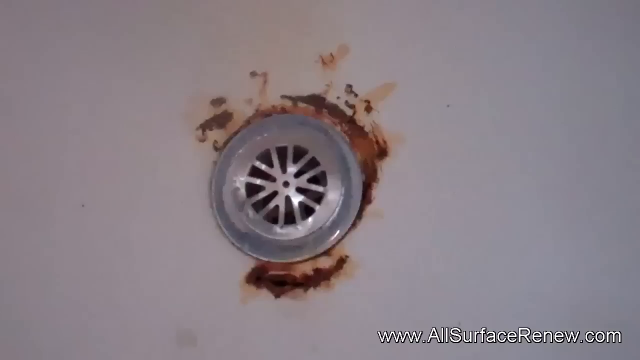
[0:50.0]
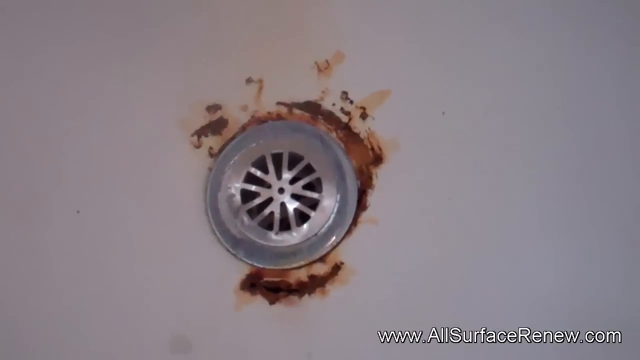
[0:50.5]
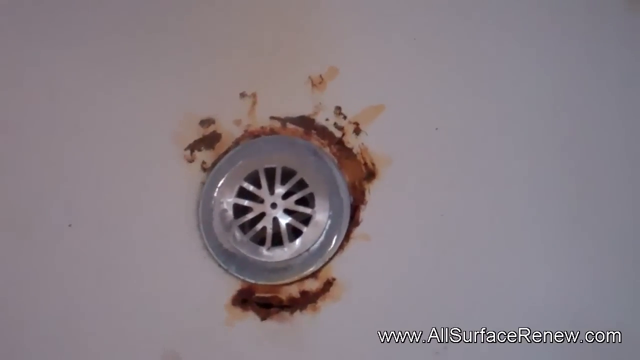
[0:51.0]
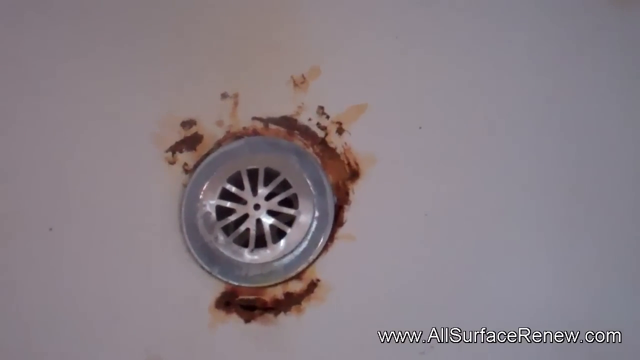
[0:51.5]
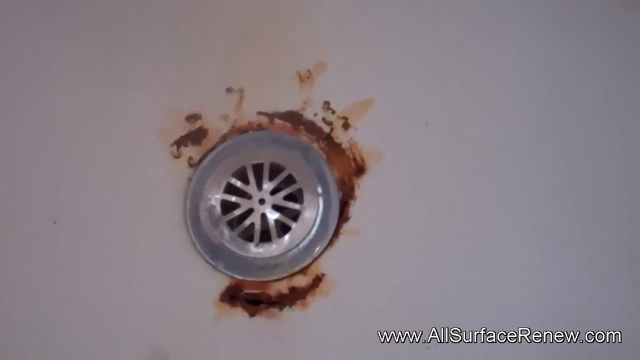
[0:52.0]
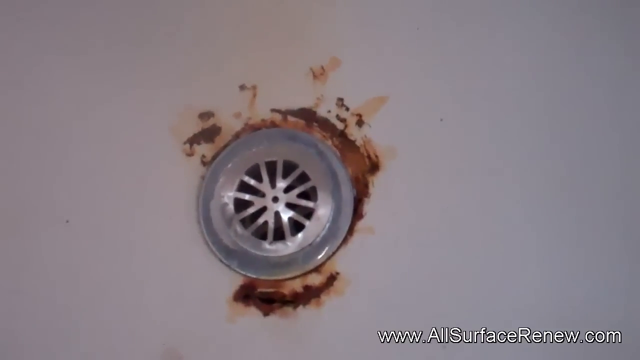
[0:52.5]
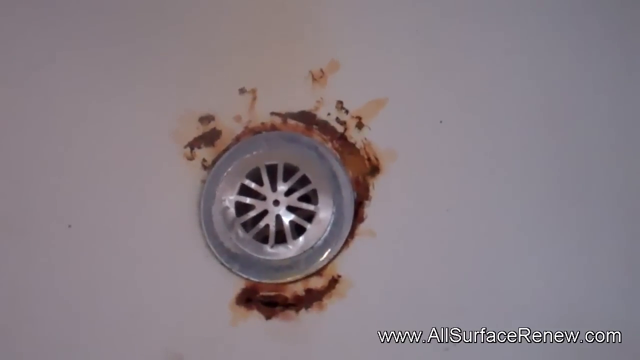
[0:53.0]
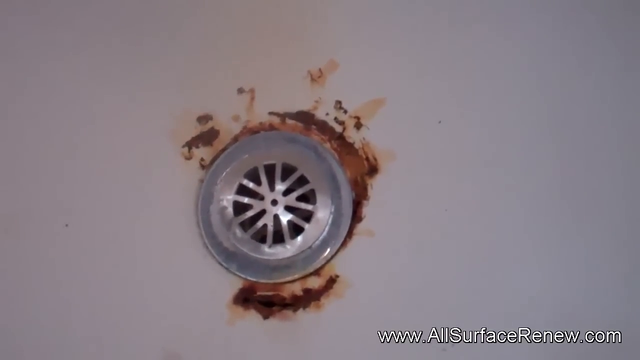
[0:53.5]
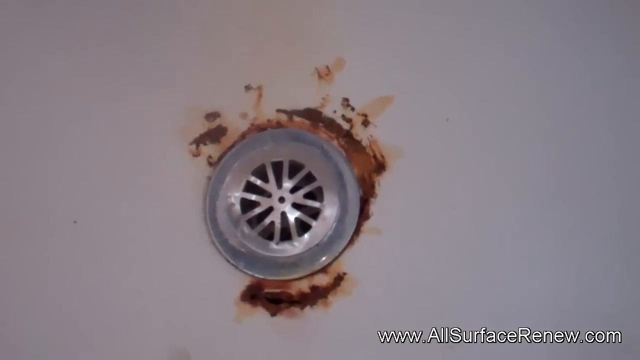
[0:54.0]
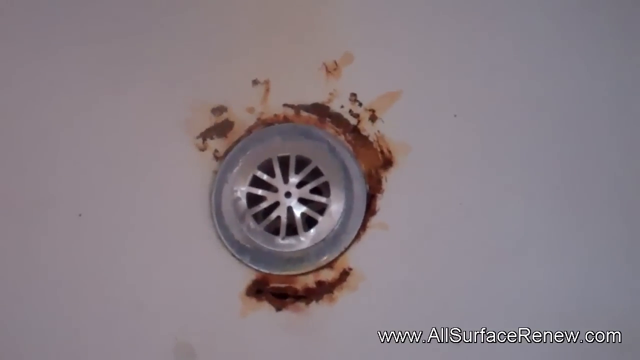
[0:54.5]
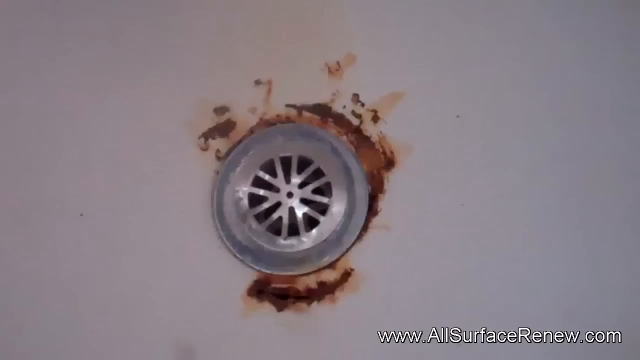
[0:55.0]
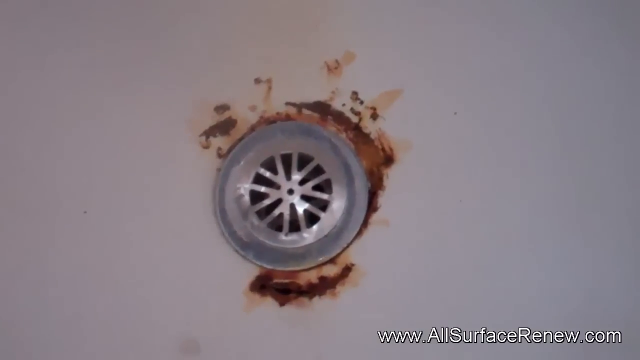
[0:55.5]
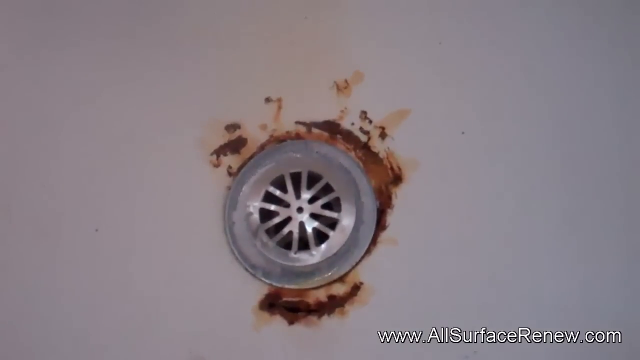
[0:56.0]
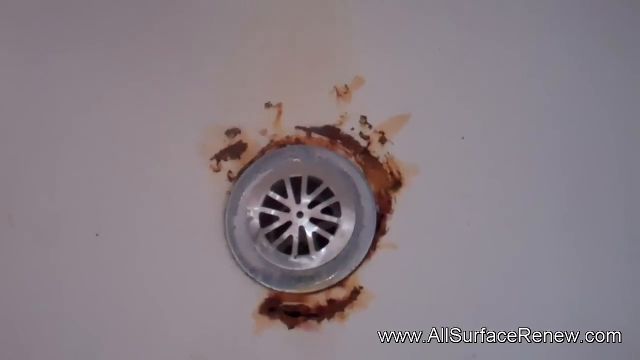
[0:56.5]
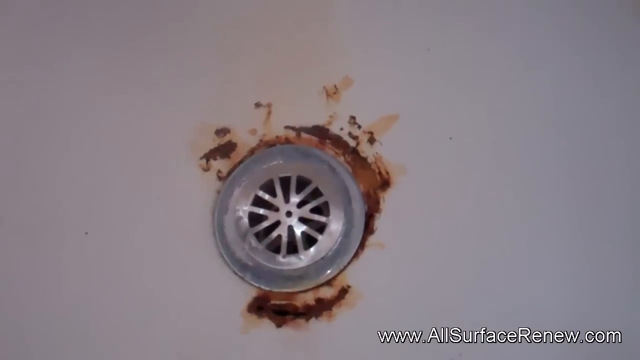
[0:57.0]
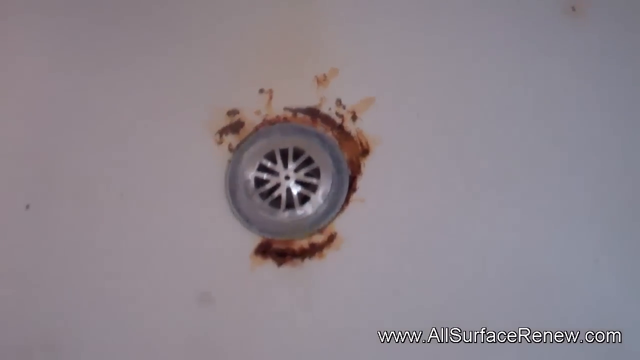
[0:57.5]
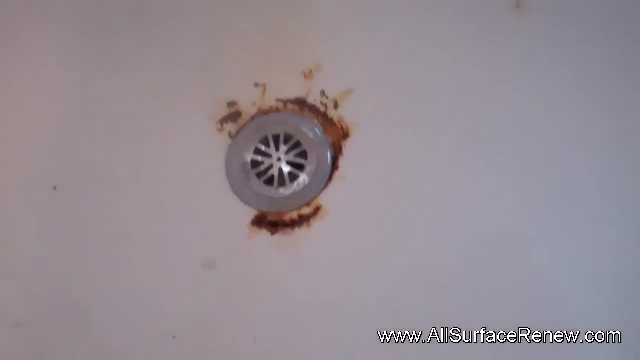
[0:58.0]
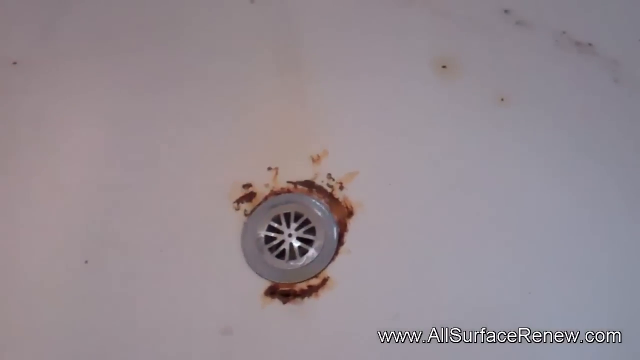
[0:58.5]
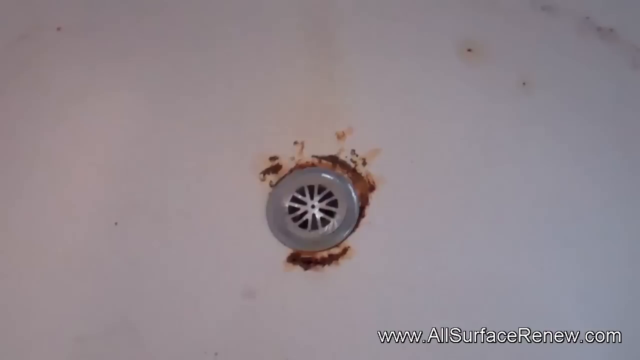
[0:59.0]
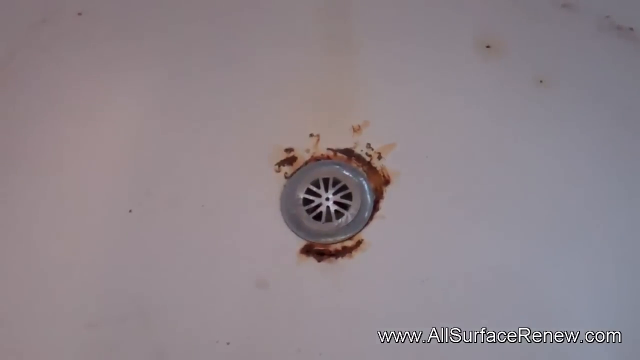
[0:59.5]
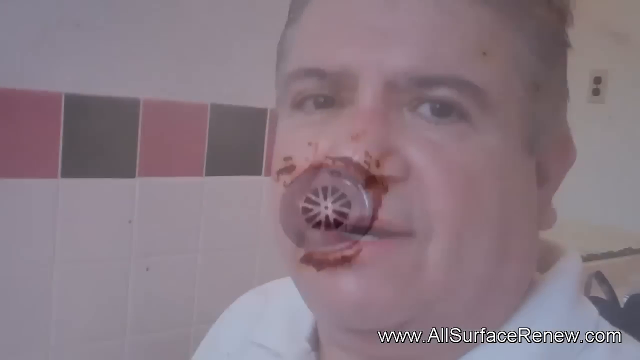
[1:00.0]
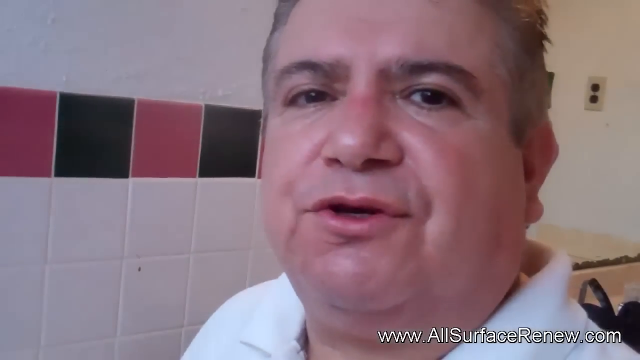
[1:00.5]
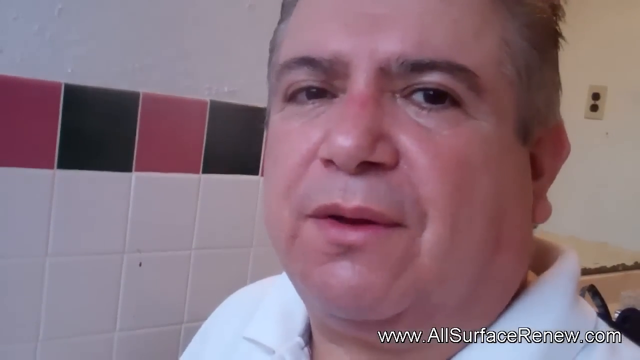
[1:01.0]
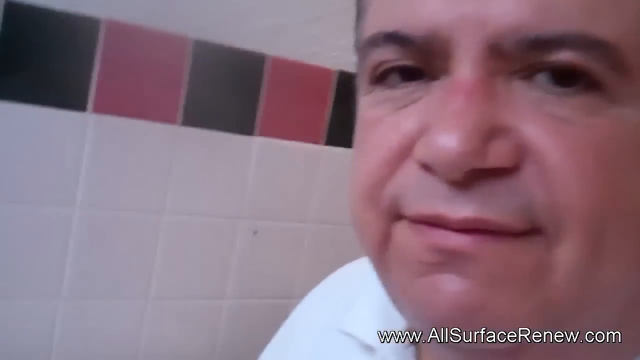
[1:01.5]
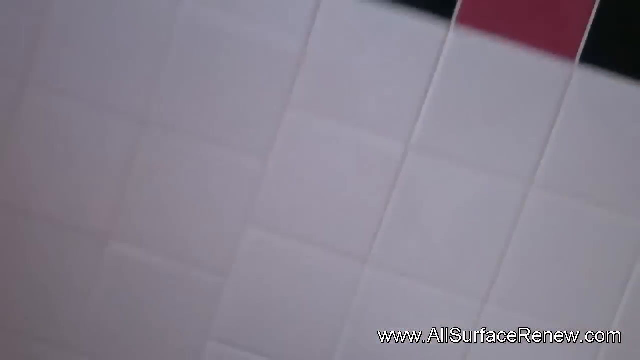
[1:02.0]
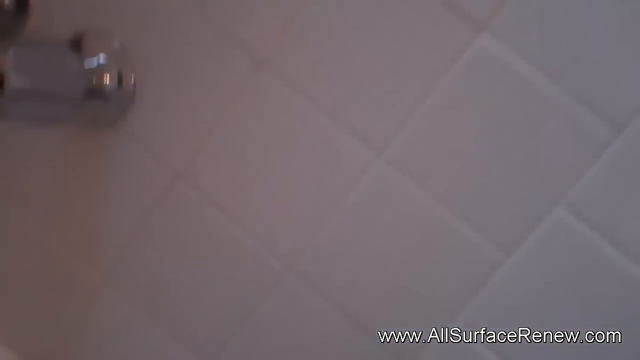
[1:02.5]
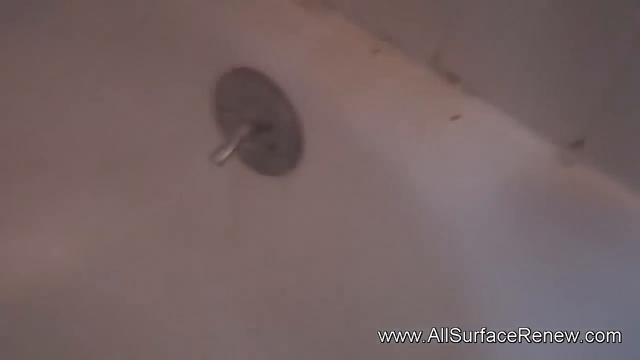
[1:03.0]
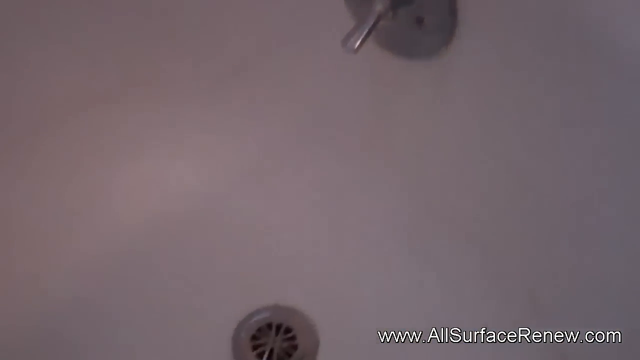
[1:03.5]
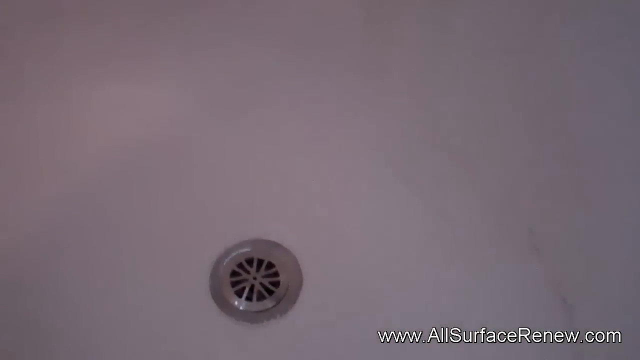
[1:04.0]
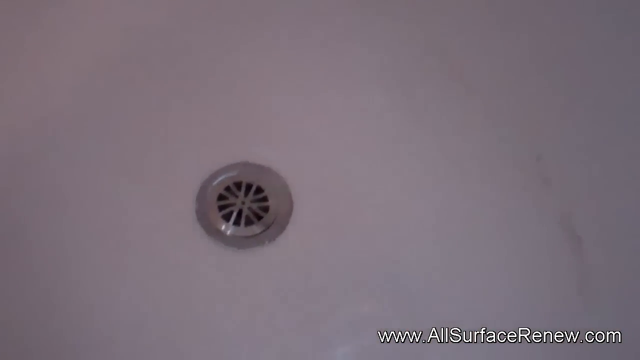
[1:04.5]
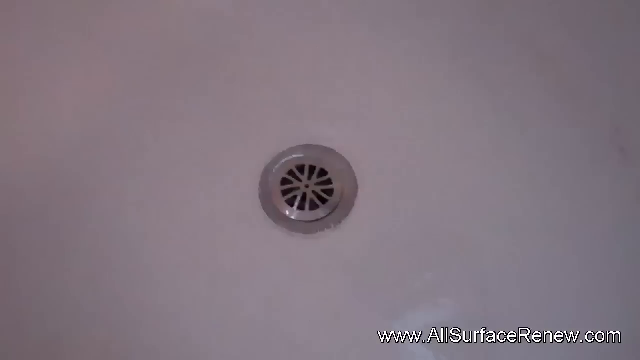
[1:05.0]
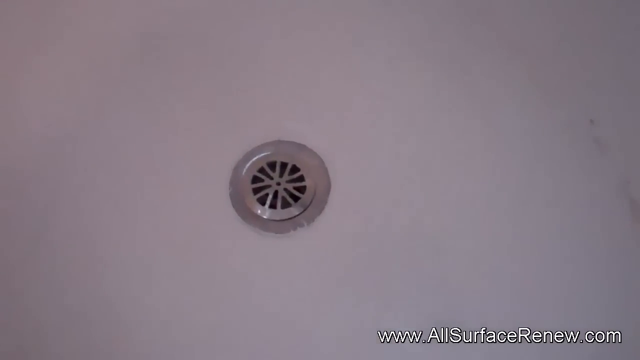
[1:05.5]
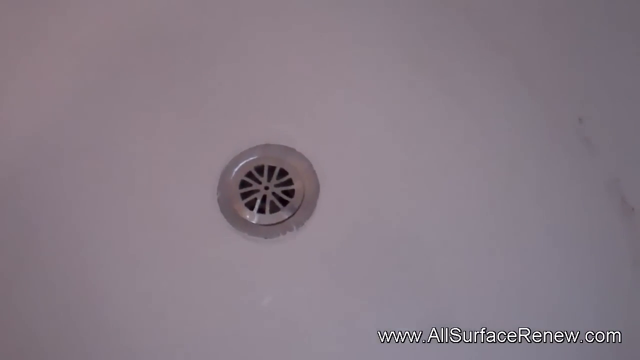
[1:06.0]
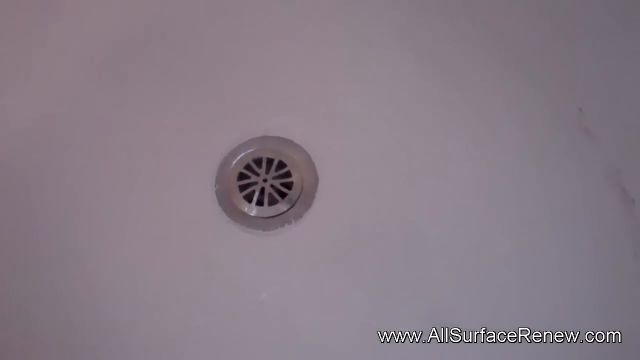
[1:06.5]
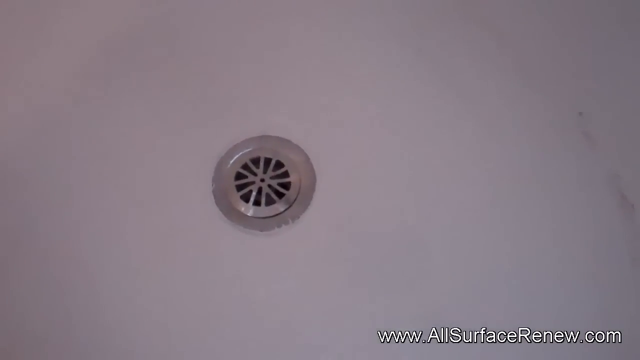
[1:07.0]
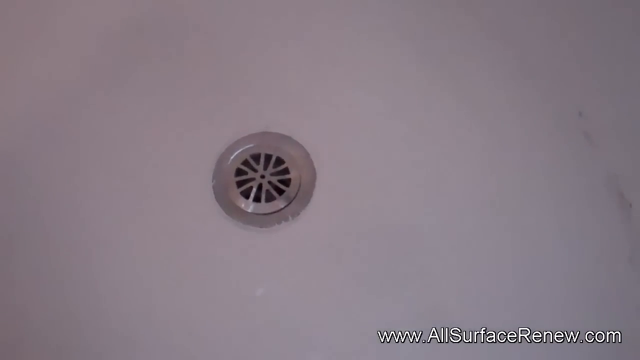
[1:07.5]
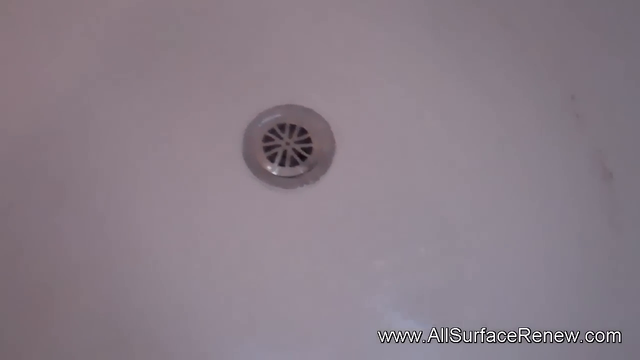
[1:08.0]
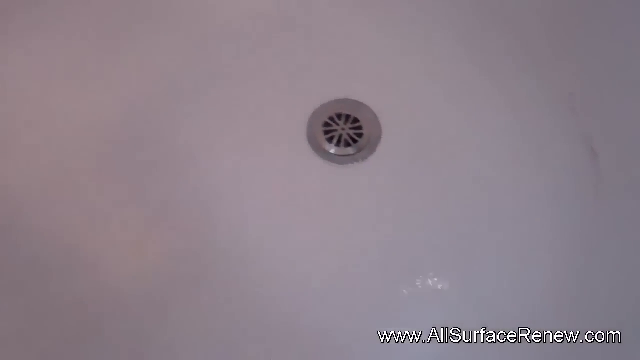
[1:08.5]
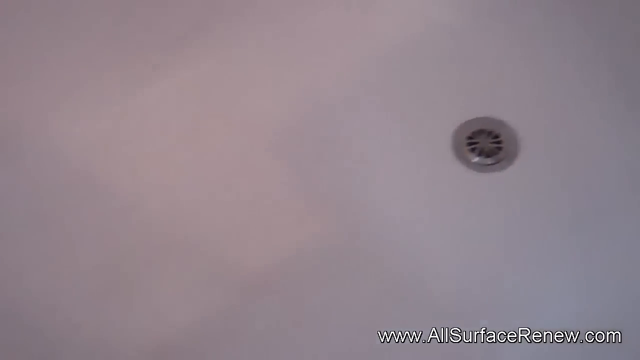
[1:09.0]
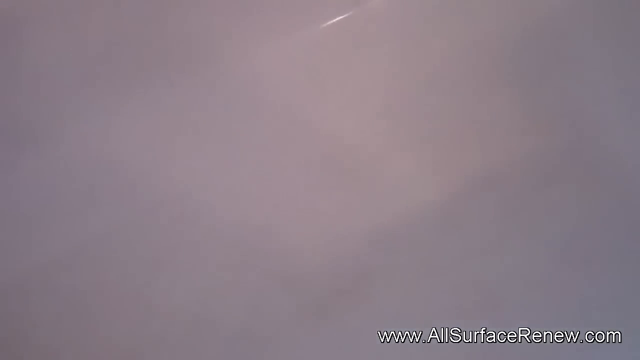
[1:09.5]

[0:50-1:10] The bathtub drain area is shown extremely rusted, while the rest of the tub around it appears to be in good condition. A link at the bottom right reads "www.allsurfacerenew.com." The camera then goes back to selfie mode, showing the man talking again: an overweight man with gray hair and a white sweater. The tile in his bathroom looks very dated and quite old, maybe not well taken care of, with black and red alternating tiles forming a pattern on top of the white tile. The camera then pans back down to the bathtub, and all of the rust is gone, leaving a clean tub with a clean drain. He pans across the rest of the tub, and everything is white and clean.